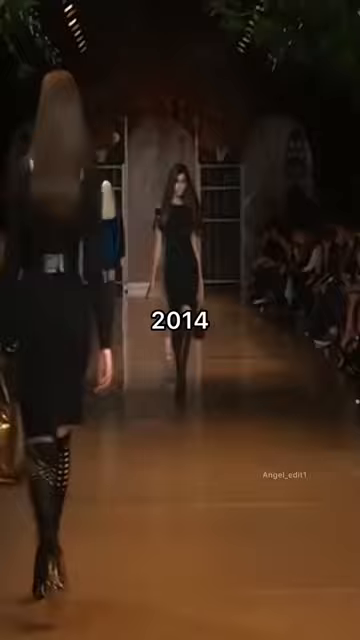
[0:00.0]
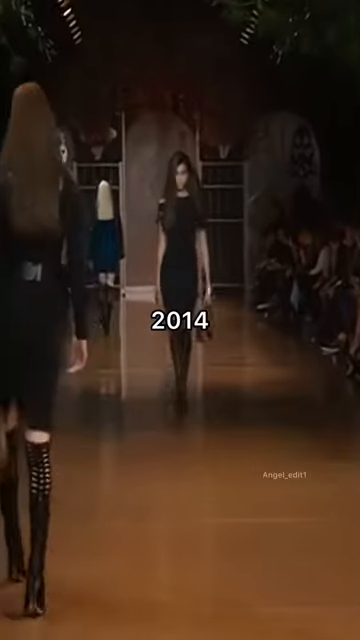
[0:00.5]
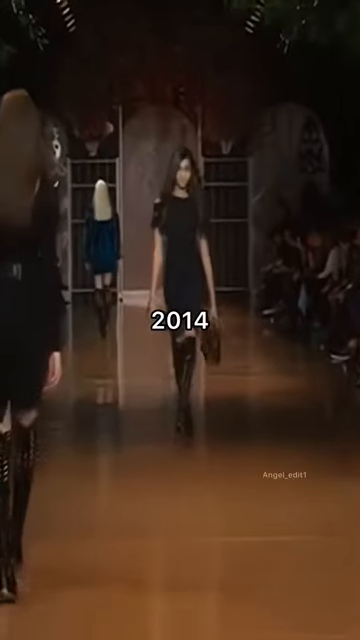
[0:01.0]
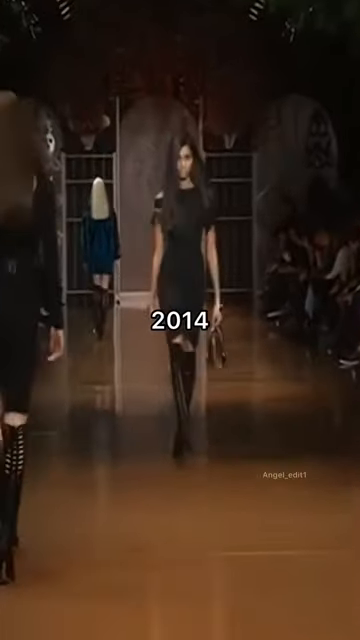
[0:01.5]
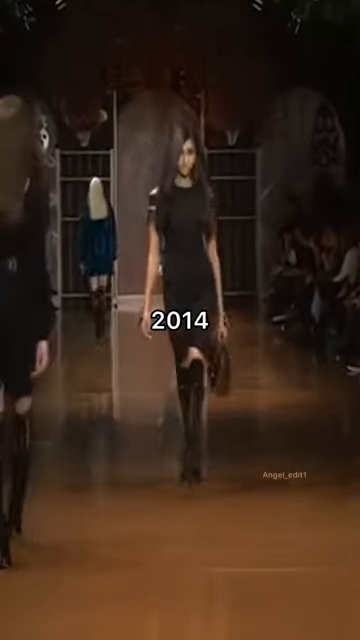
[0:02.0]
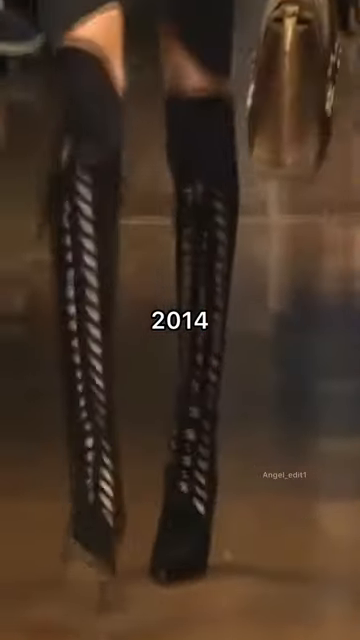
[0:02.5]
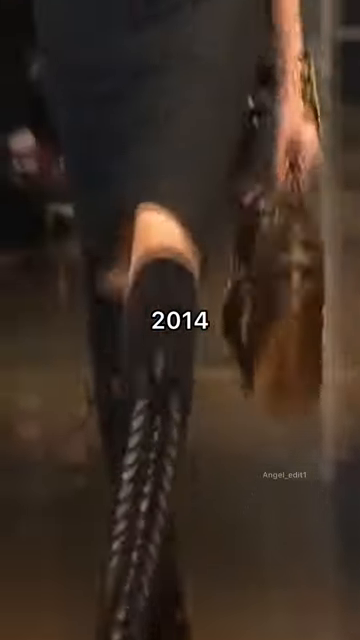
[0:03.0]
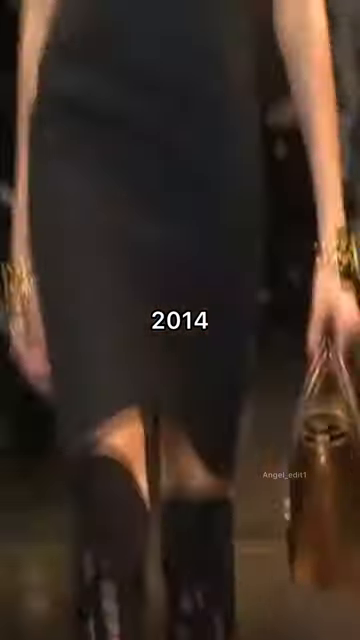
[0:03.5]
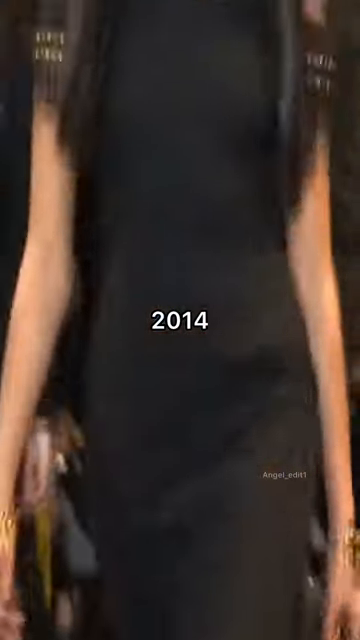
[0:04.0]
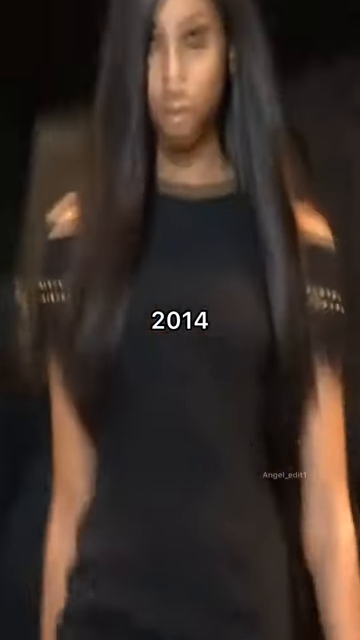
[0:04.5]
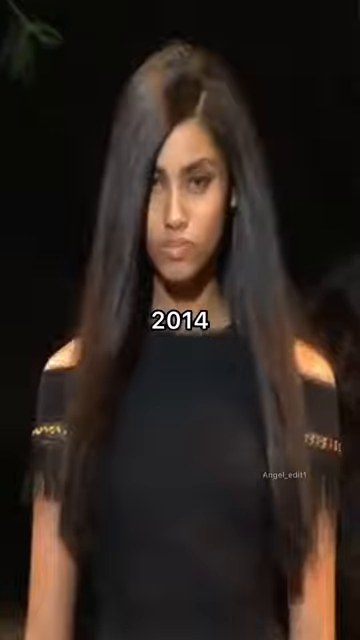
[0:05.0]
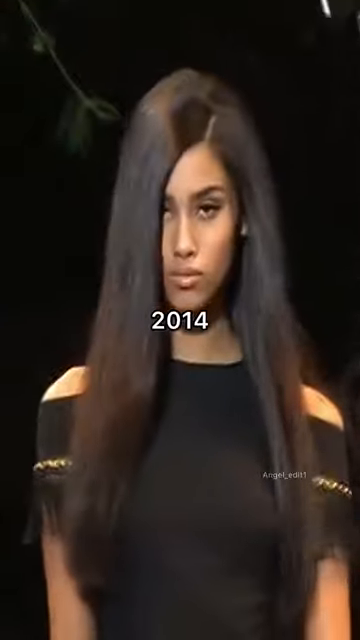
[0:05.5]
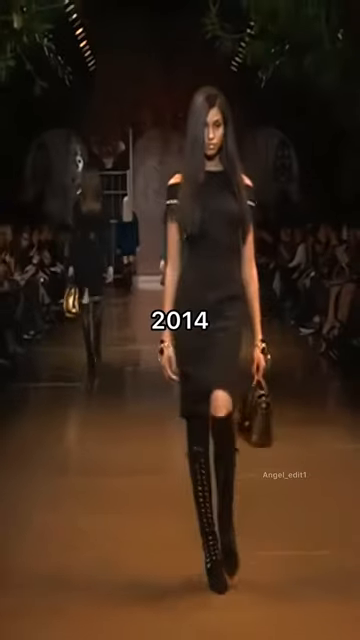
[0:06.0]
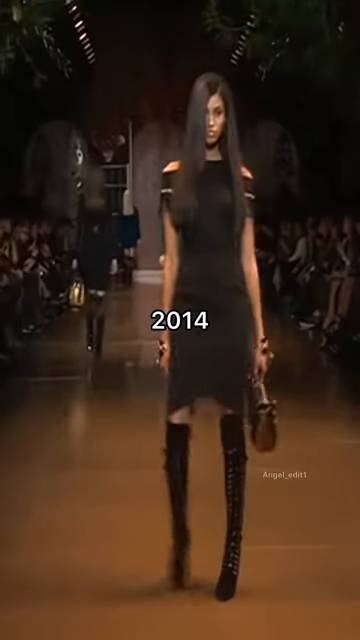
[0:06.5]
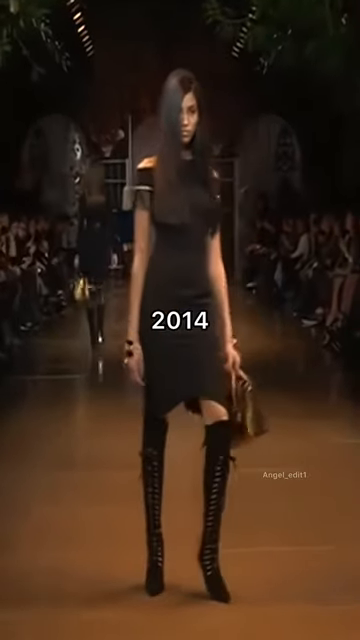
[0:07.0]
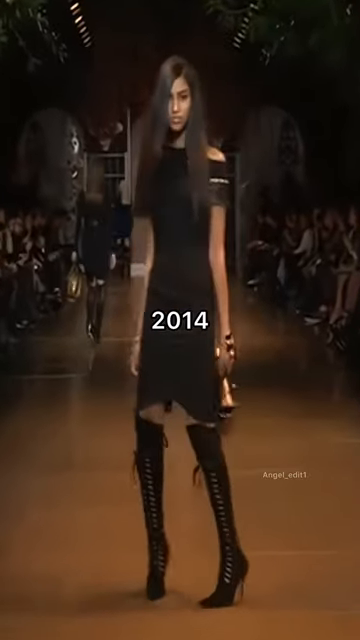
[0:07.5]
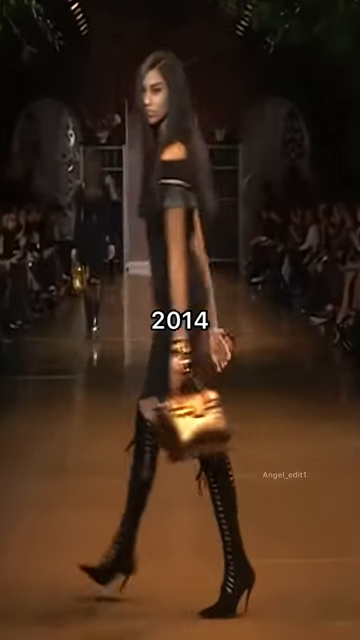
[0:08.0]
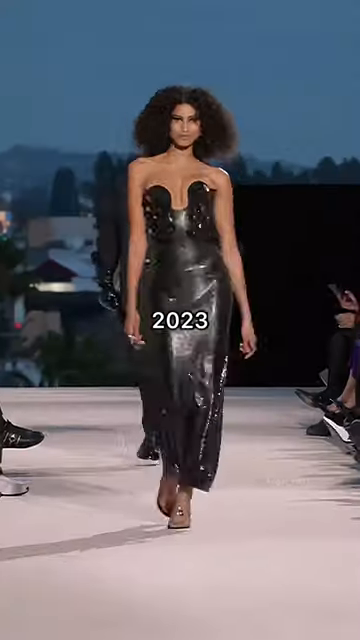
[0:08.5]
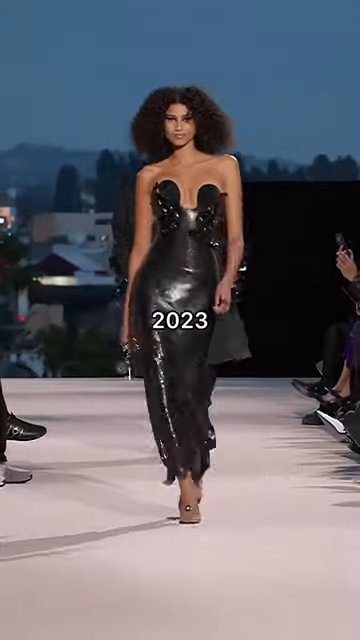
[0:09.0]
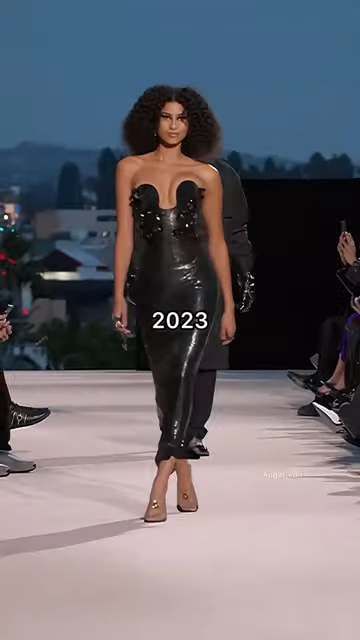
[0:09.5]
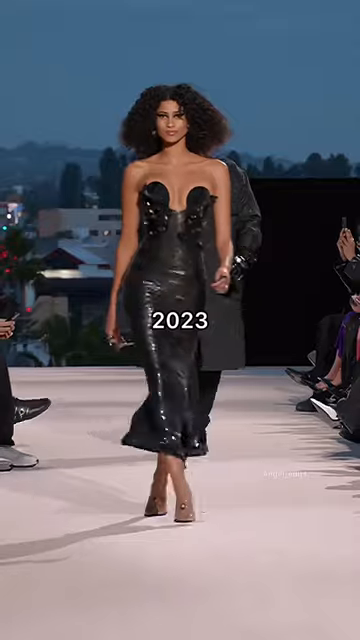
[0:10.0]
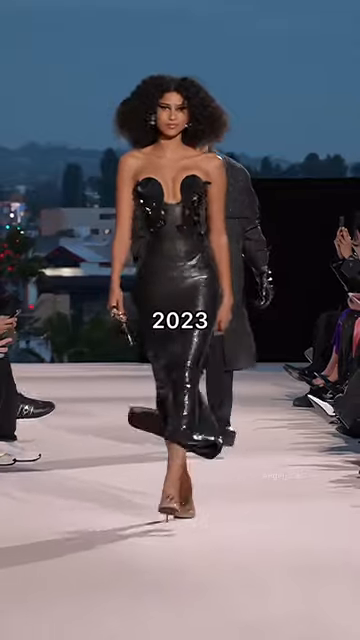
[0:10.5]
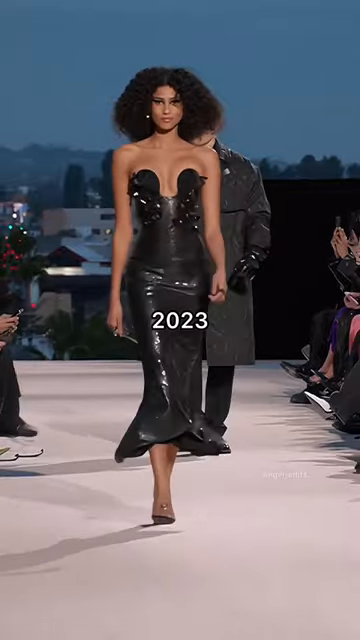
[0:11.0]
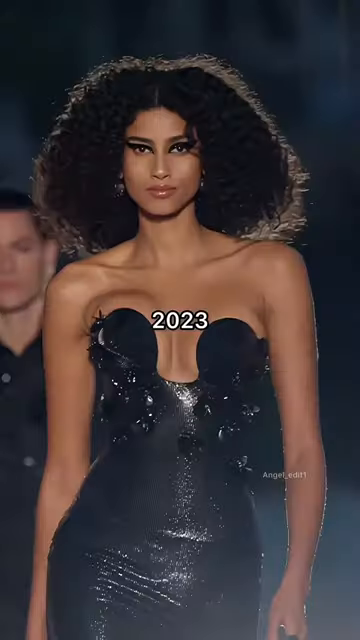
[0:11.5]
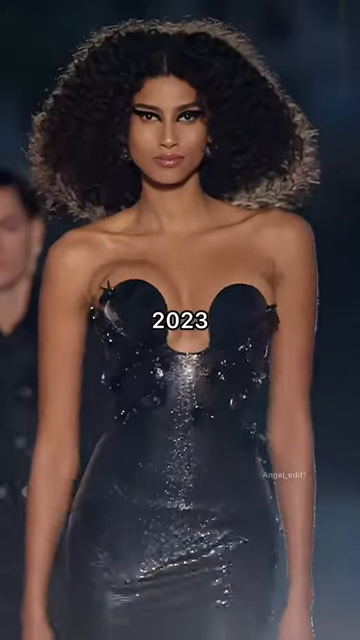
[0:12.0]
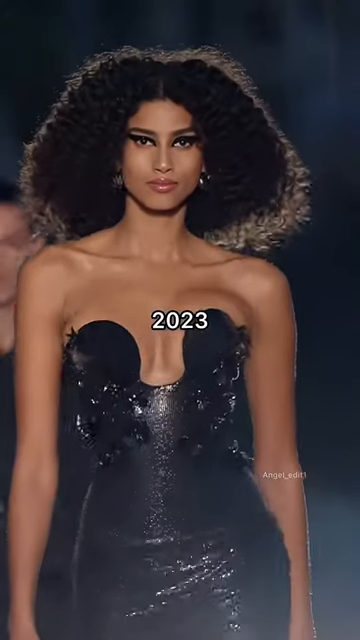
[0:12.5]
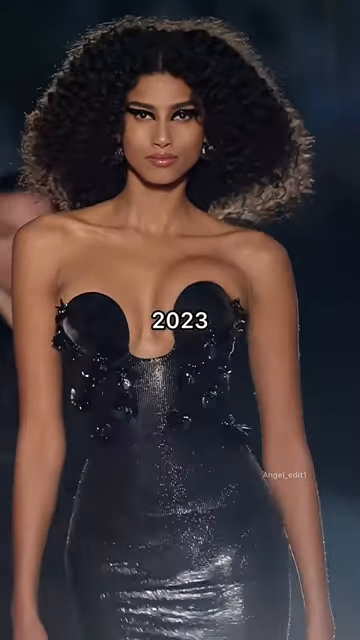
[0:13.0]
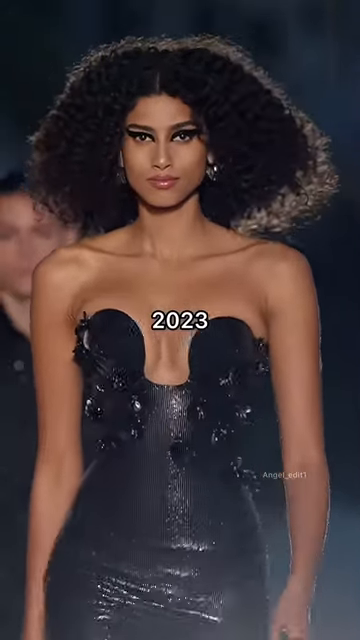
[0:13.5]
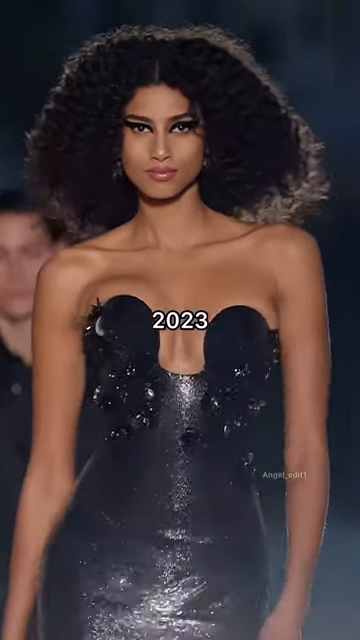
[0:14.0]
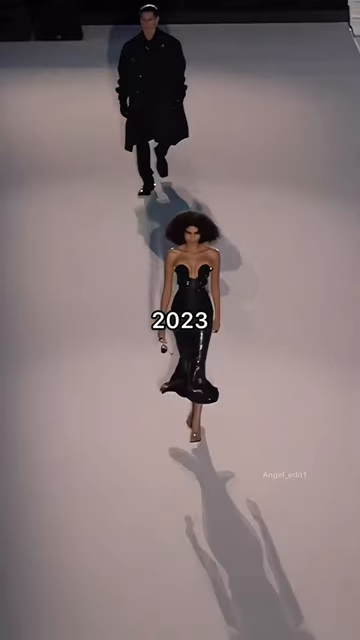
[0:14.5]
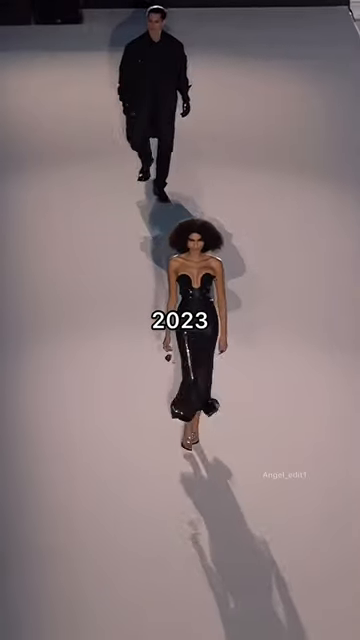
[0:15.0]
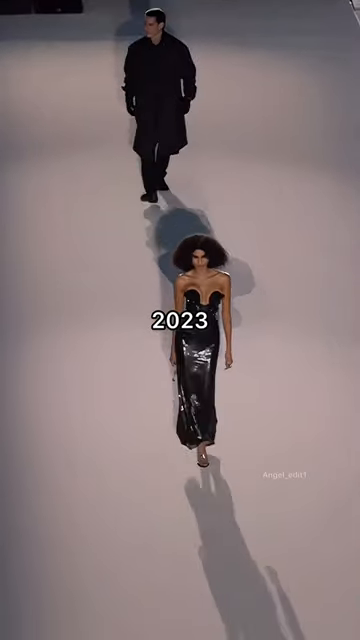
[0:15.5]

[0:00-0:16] A young woman with olive skin and straight dark hair walks down a runway. She wears black clothing, like a black dress with black knee-high boots, and carries a gold bag. "2024" appears in white letters in the center of the image. The next frame reads "2023" and apparently shows the same woman walking down a runway, with much sharper video quality. She wears a strapless black dress, and her hair is very curly, stopping right above her shoulders and bouncing as she walks. She appears to be wearing gold heels, and her makeup is done. The runway she walks on appears to be white, and the setting looks like it is outdoors, with some rooftops visible in the background and what could be a sunset. People are seated on each side of the runway, taking pictures as she walks forward towards the camera. In the 2023 footage she holds something in her hand that looks almost like car keys.